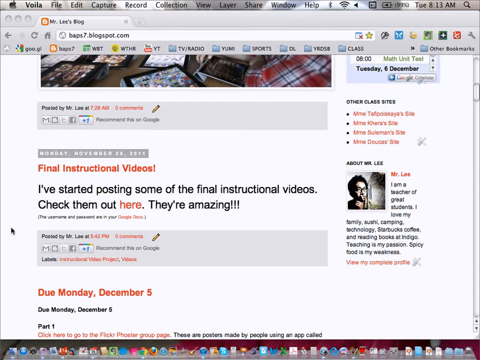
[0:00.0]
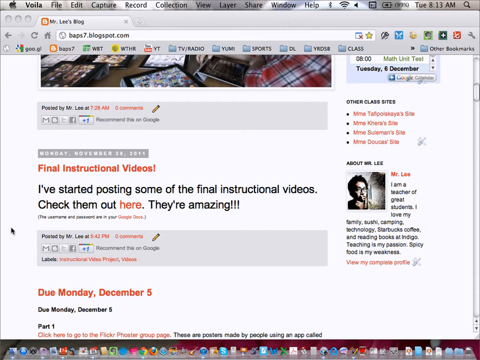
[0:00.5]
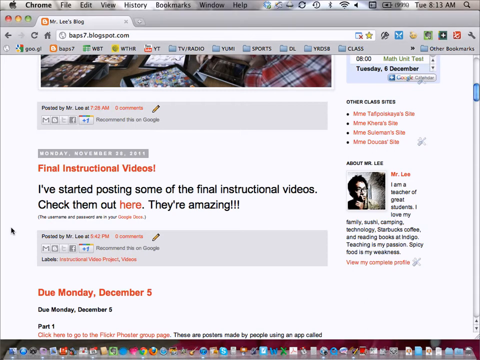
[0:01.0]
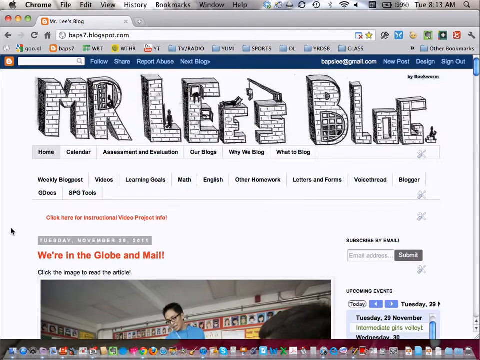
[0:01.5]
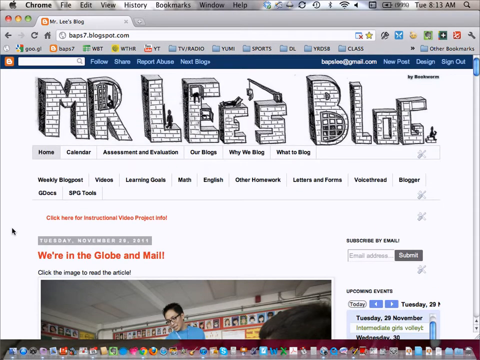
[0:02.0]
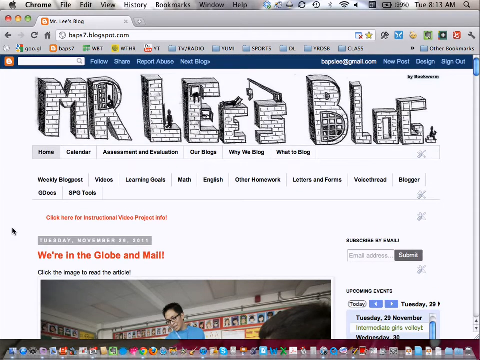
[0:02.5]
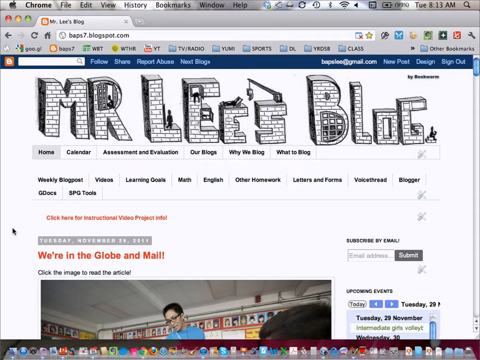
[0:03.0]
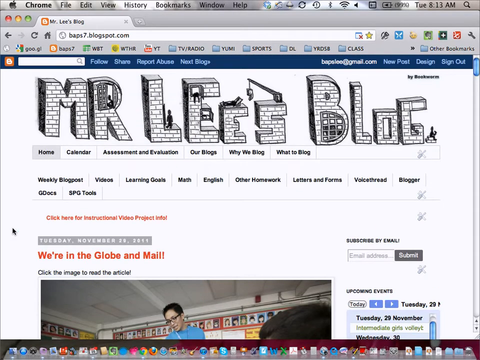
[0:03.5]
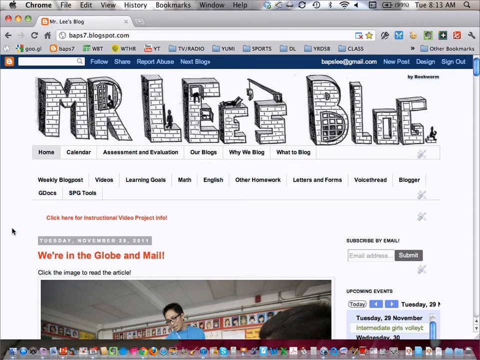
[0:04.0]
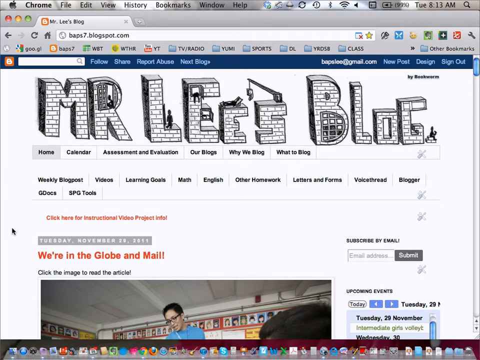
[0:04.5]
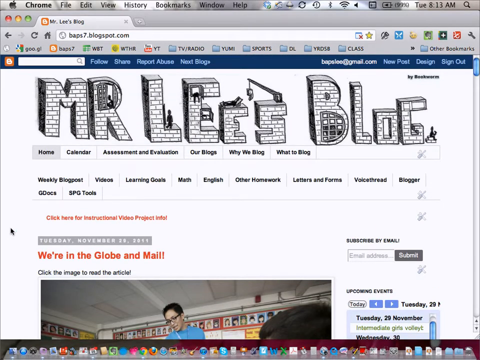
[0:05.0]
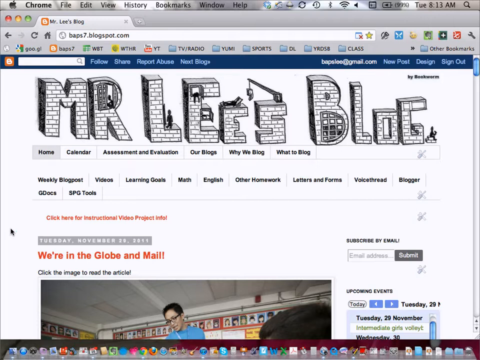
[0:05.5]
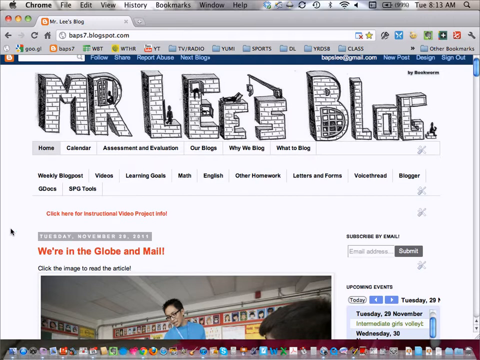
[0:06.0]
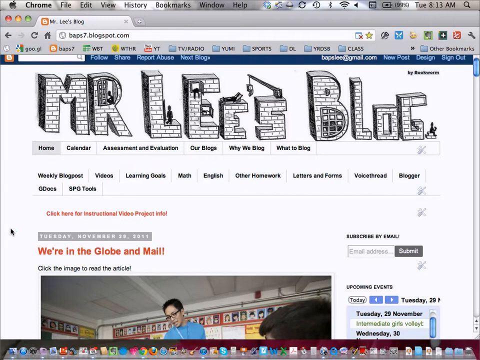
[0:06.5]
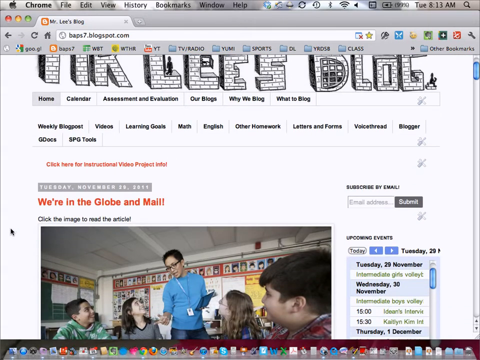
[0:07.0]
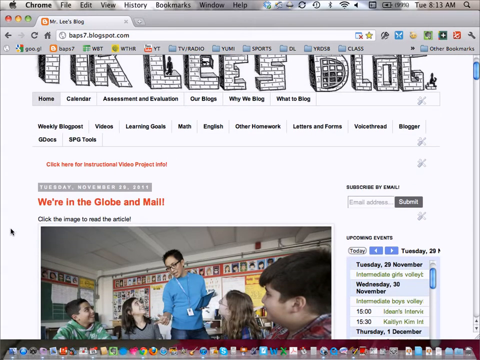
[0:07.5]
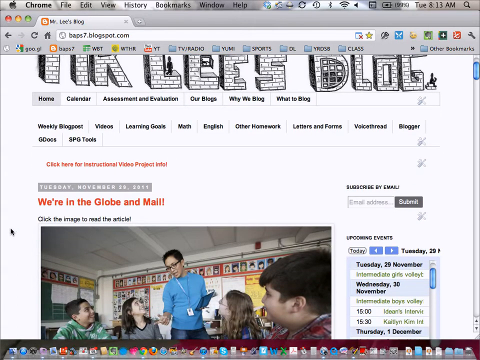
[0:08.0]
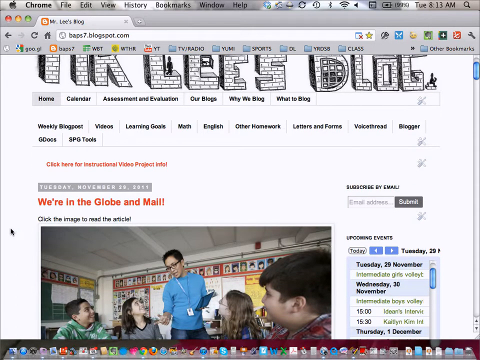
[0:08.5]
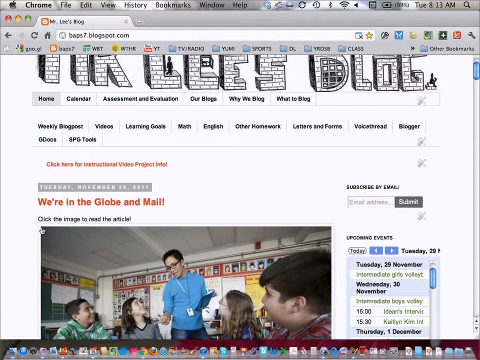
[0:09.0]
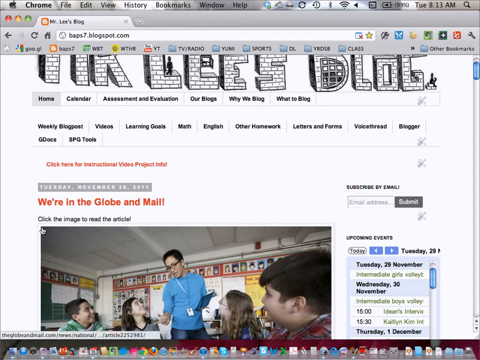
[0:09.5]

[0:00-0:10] A screen recording of an Apple Macintosh computer shows the Google Chrome browser open on a website with the address baps7blogspot.com. The page has a white background with text, and the screen illustrates Mr. Li's blog. It looks to be a classroom blogspot website where information about class activities is shown. The first post displayed is titled "We're in the Globe and Mail," with an image of a classroom and a teacher below it. It appears that this teacher and his class have been featured in the Globe and Mail newspaper.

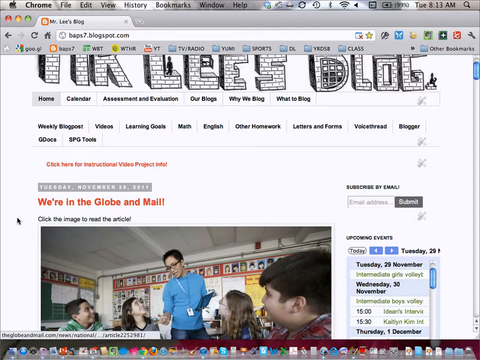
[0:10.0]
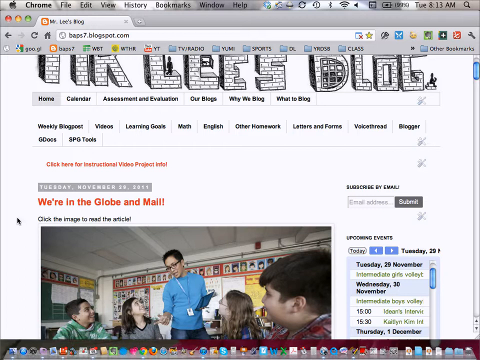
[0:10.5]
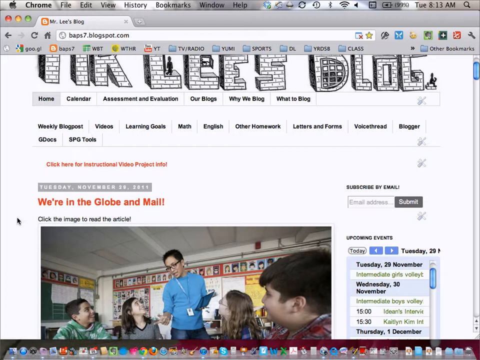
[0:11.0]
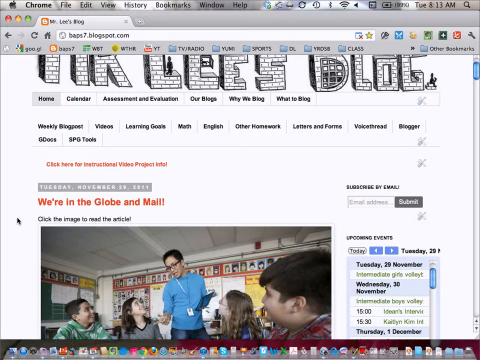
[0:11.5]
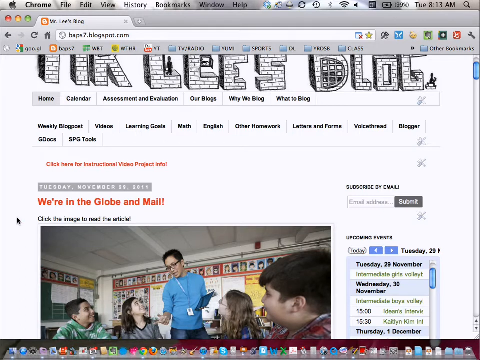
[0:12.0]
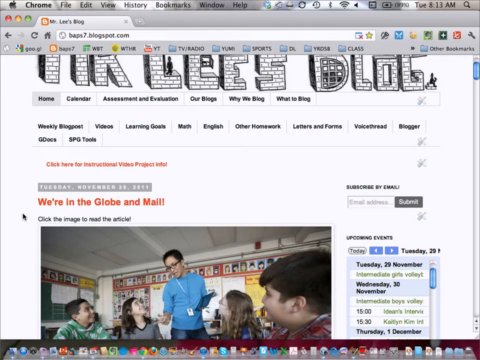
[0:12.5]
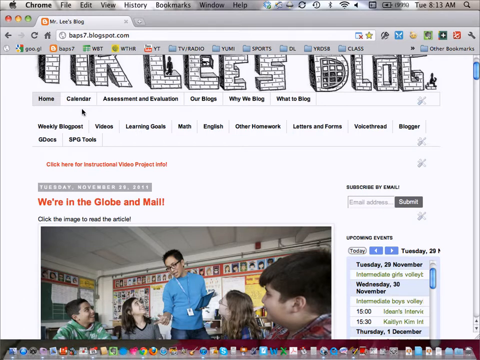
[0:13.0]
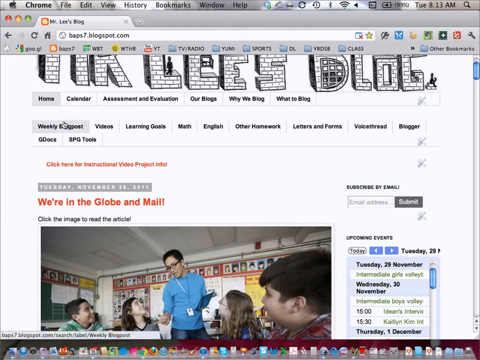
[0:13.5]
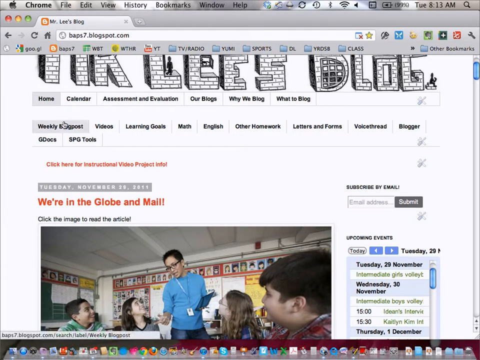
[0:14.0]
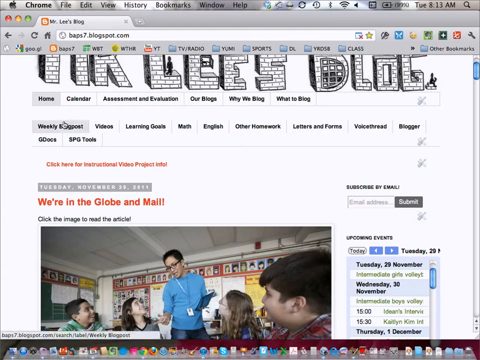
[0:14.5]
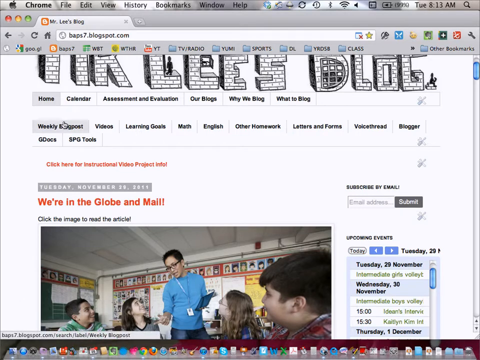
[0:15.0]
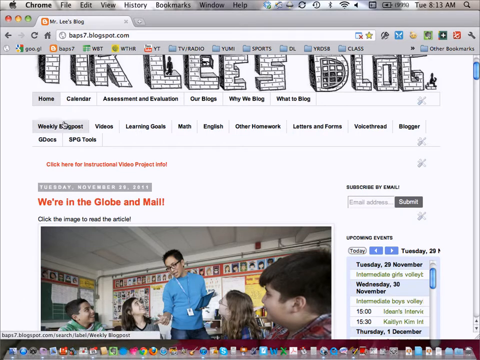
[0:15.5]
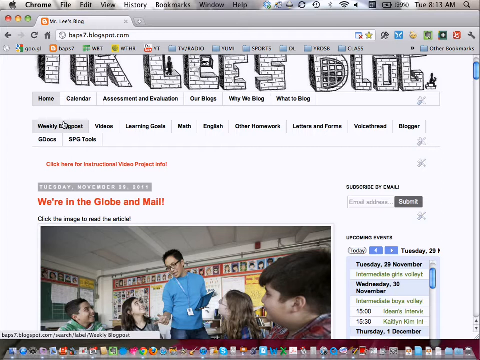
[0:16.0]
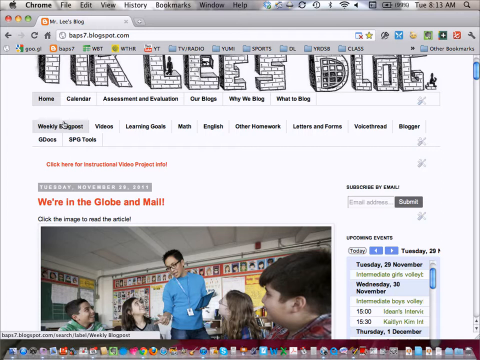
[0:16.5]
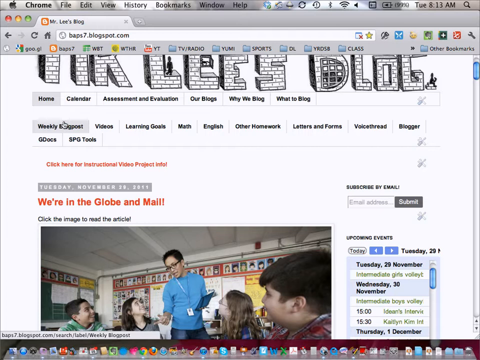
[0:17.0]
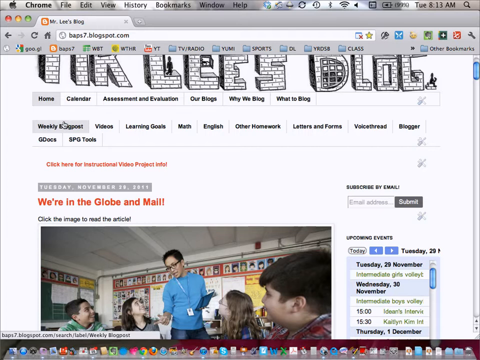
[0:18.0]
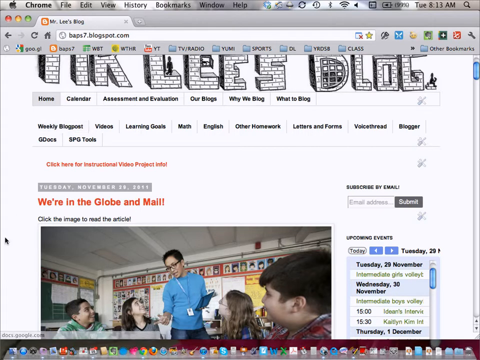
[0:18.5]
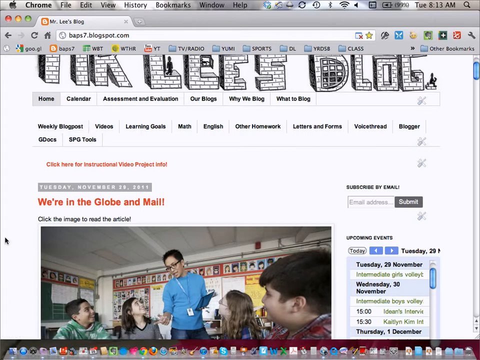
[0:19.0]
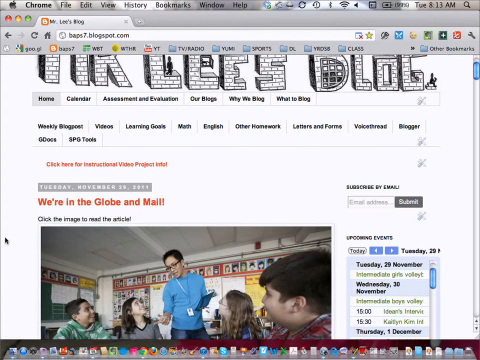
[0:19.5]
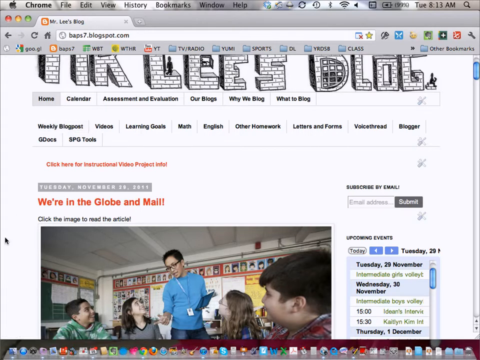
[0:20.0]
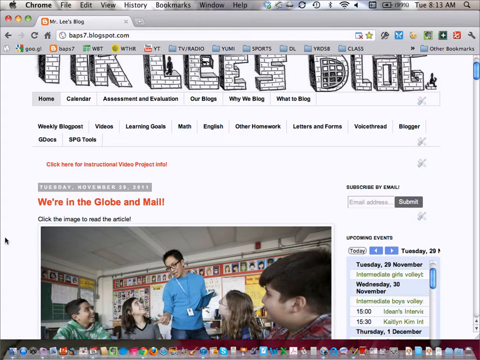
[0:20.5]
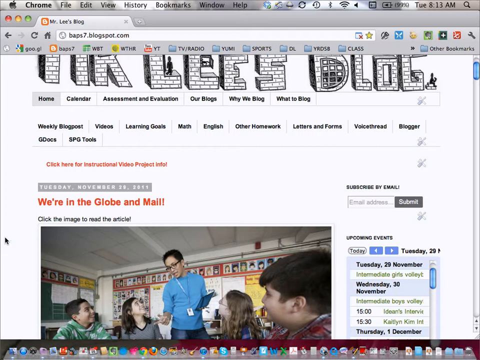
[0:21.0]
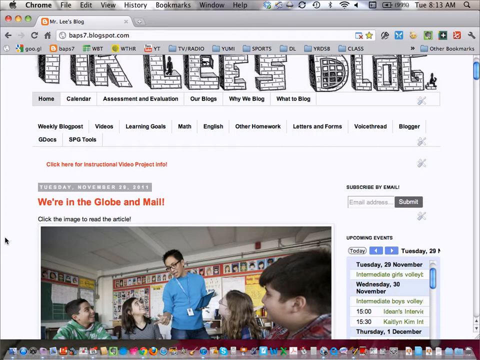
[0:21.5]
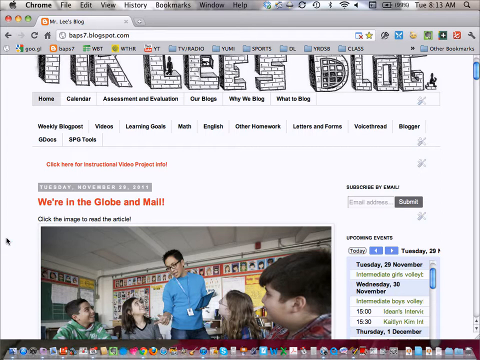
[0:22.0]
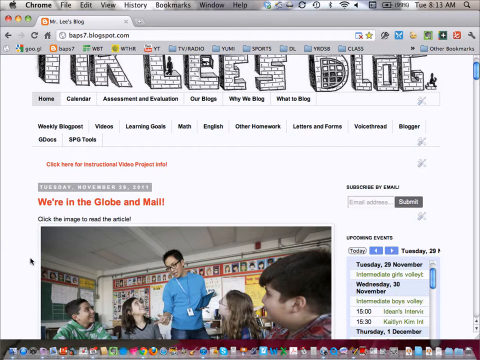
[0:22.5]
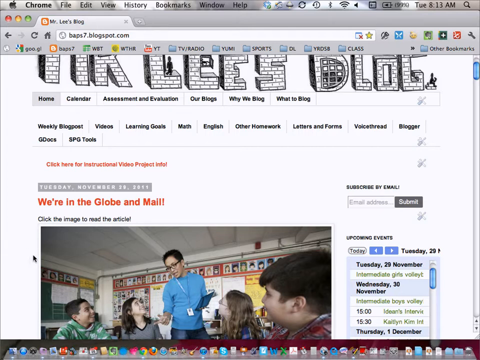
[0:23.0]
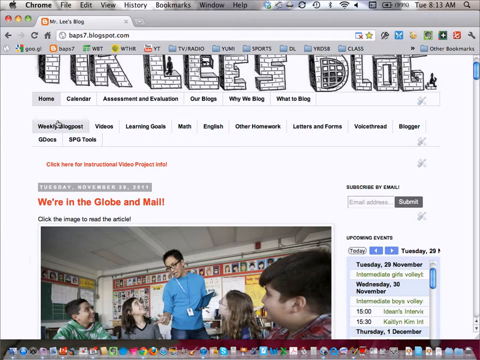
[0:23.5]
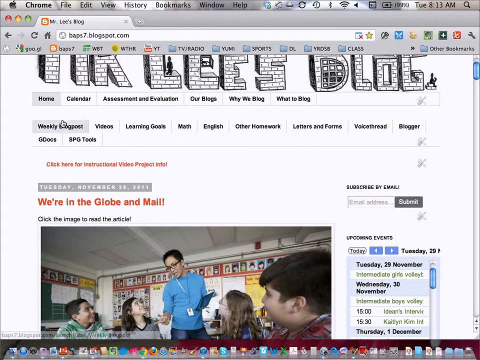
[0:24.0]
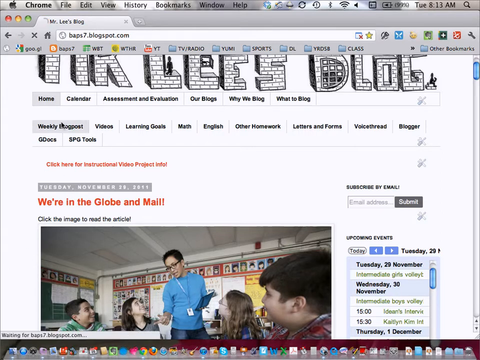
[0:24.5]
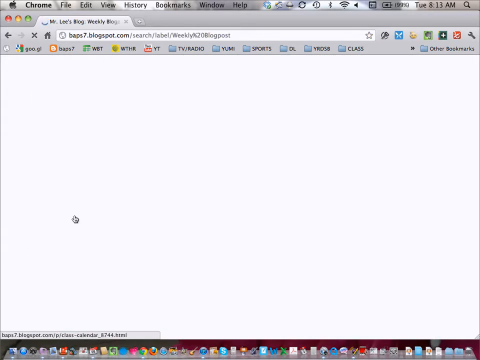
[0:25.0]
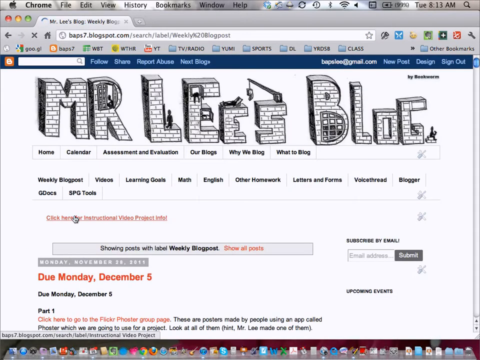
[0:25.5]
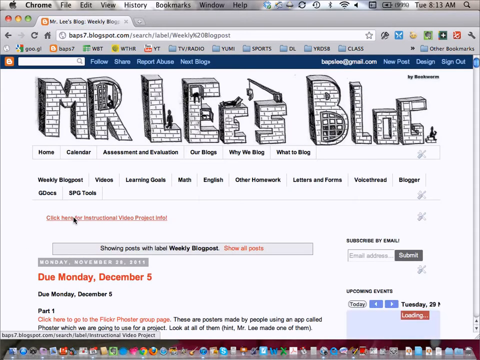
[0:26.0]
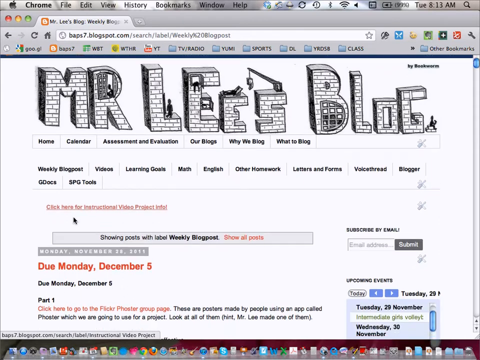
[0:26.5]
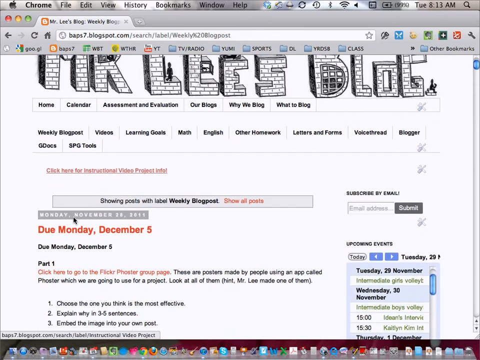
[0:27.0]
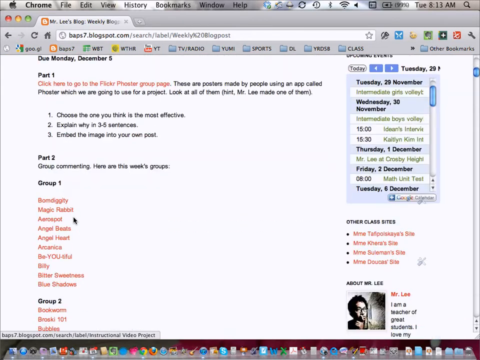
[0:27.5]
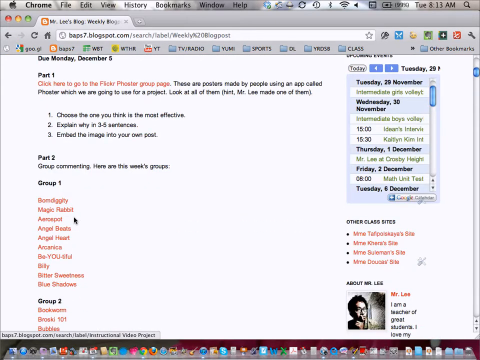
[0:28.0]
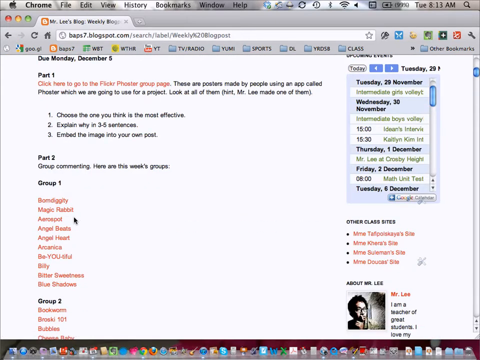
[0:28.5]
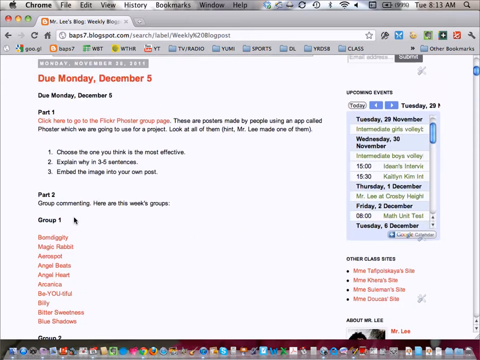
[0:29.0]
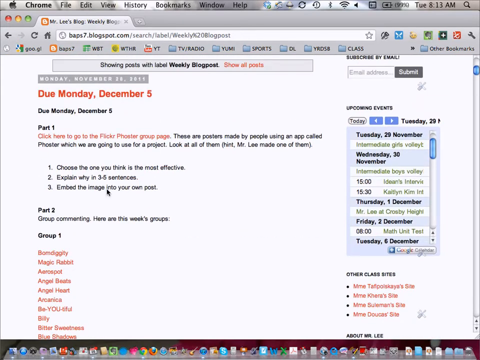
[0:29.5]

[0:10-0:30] The cursor is on the left-hand side of the screen before moving up to a submenu titled "Weekly Blog Post." It then moves back to the right-hand or left-hand side of the screen before returning to the "Weekly Blog Post" submenu button and clicking it. The website reloads with a new page whose title, in red text, includes "Monday's December 5th." The video scrolls down through more and more text giving instructions for a project, groups and group members, and other information in red and black text on a white background. At the top of each page is the Mr. Lee's Blog illustrated logo or banner, in big block letters spanning the entire width of the website. It is black and white, and the letters are drawn as brick designs with different elements encased along and within them.